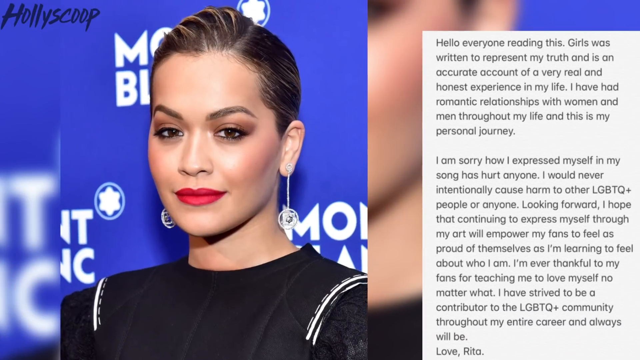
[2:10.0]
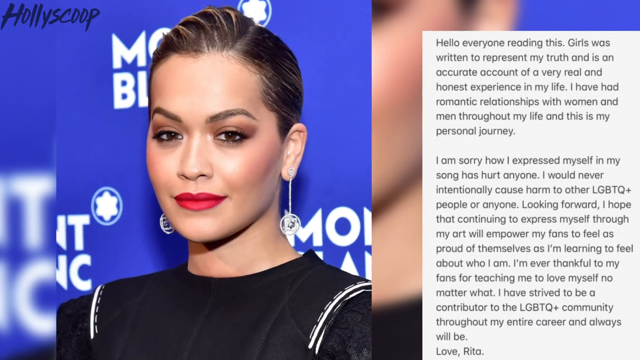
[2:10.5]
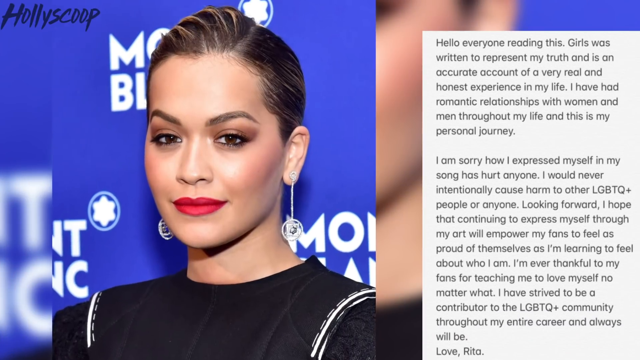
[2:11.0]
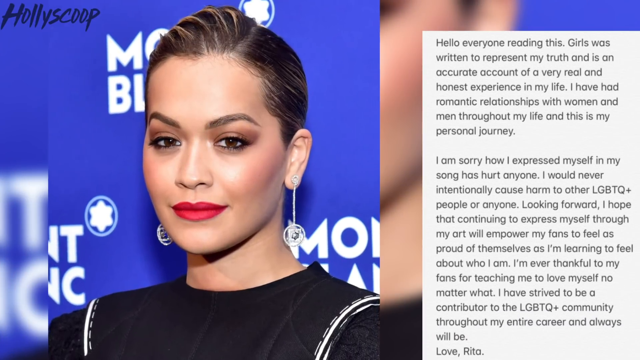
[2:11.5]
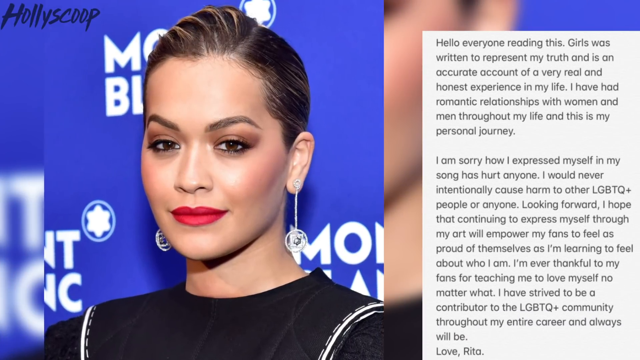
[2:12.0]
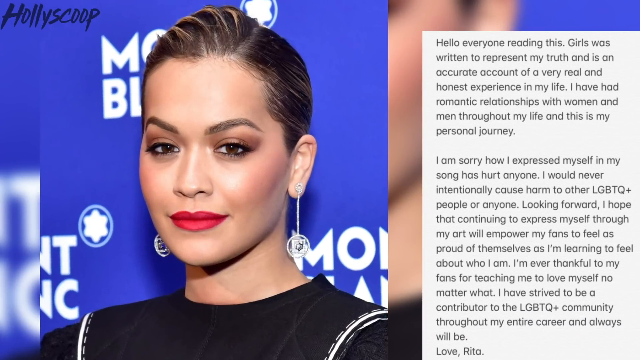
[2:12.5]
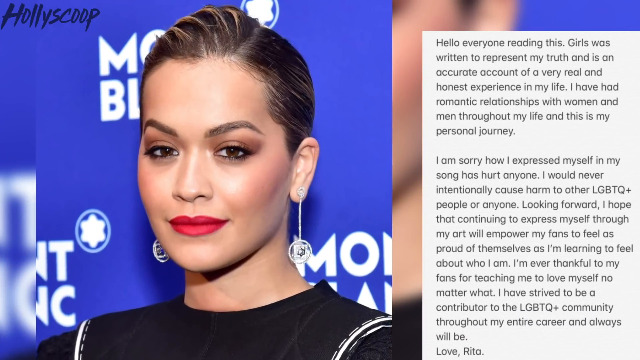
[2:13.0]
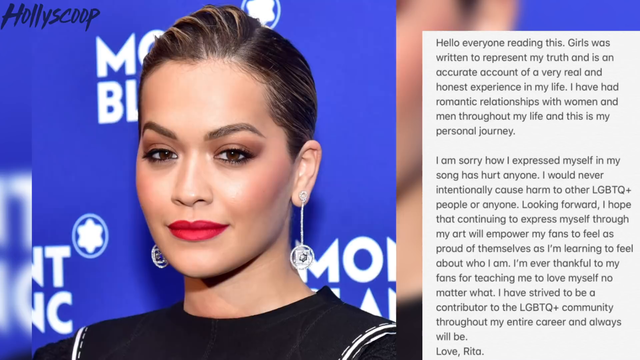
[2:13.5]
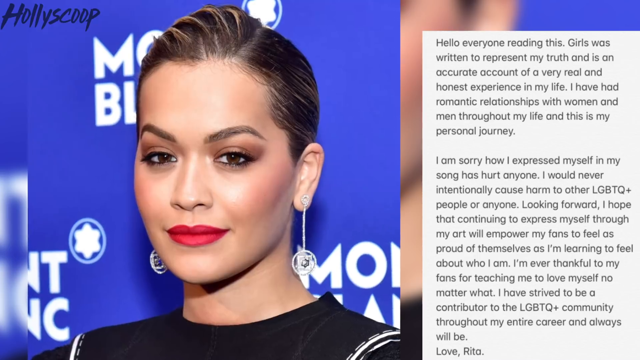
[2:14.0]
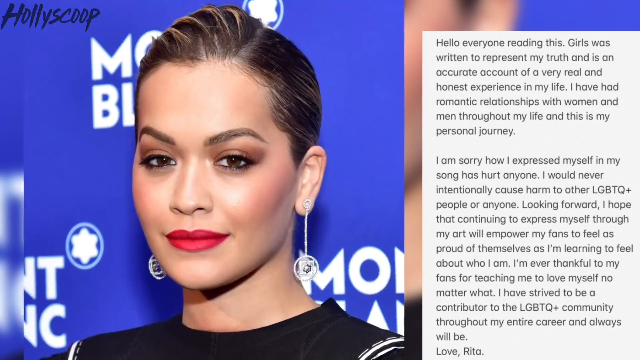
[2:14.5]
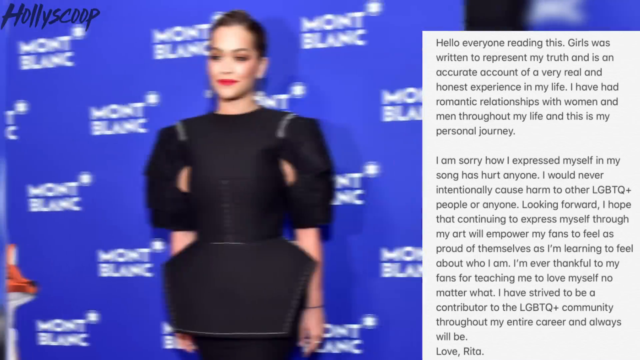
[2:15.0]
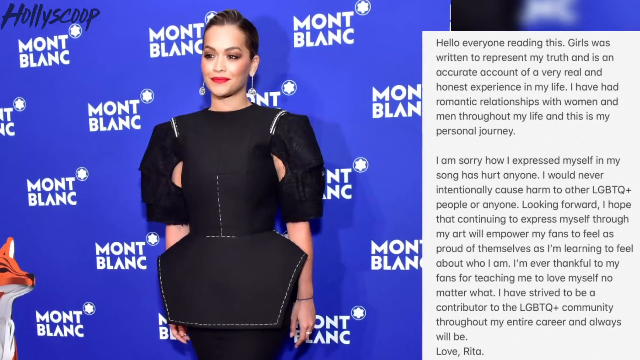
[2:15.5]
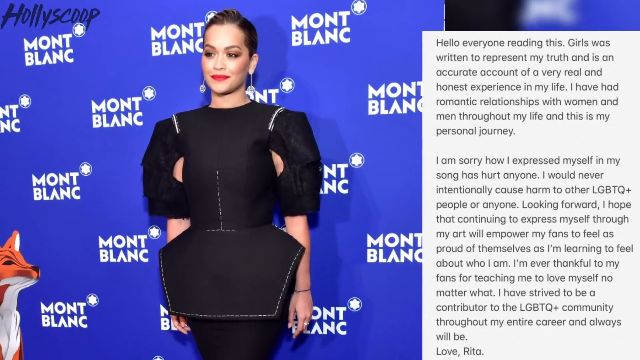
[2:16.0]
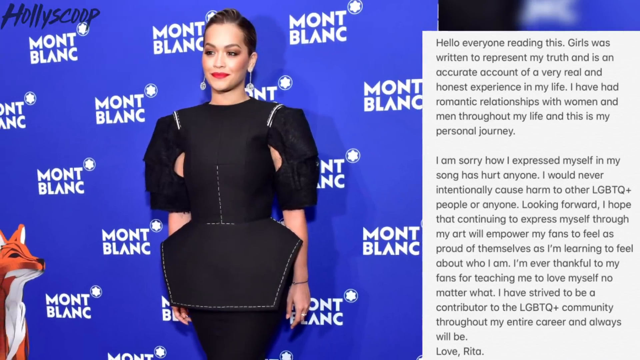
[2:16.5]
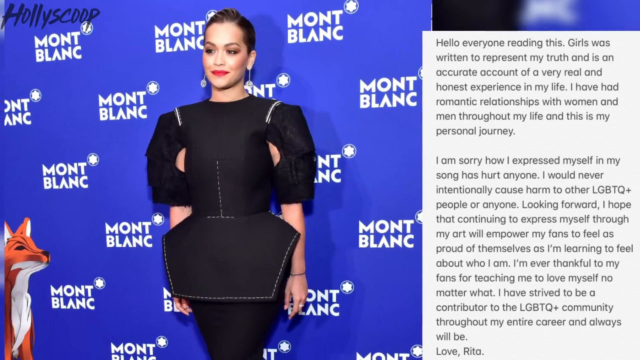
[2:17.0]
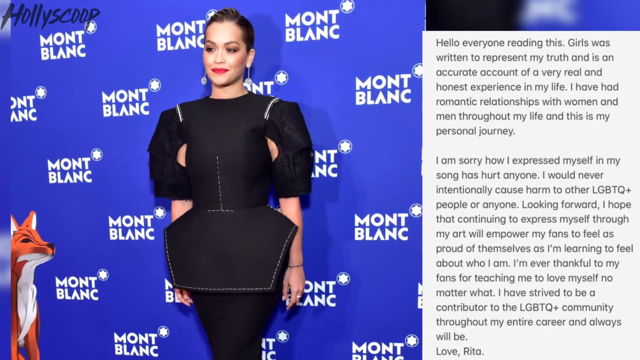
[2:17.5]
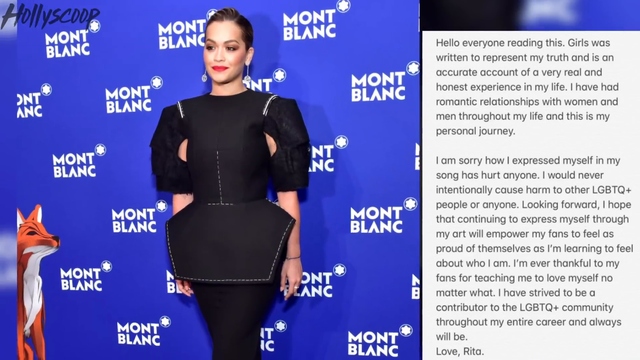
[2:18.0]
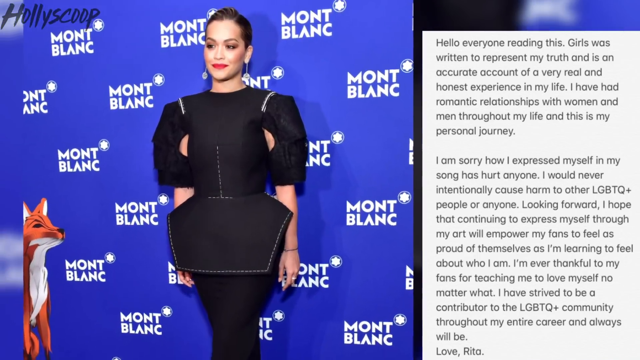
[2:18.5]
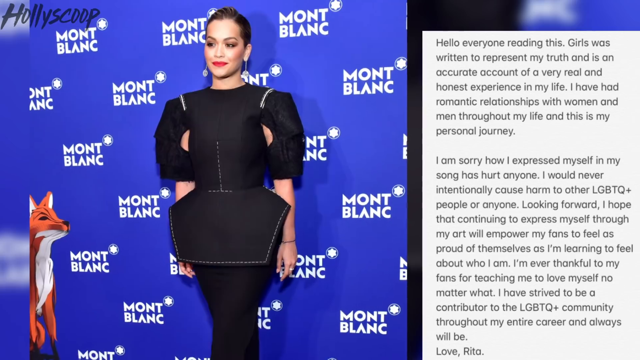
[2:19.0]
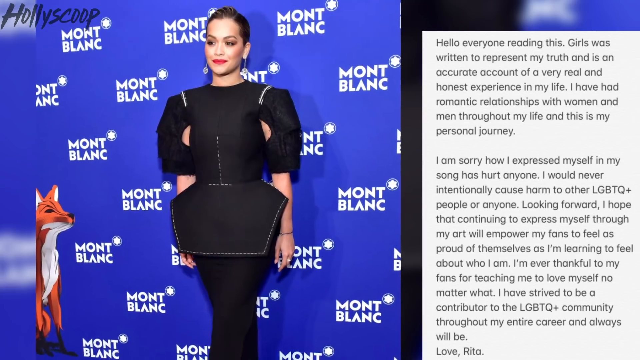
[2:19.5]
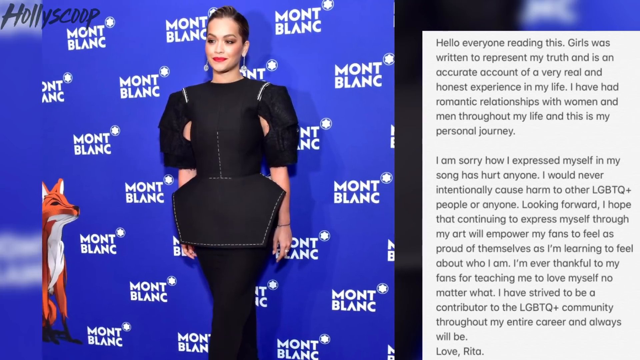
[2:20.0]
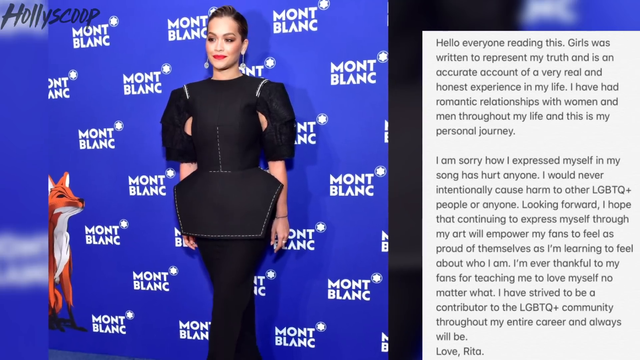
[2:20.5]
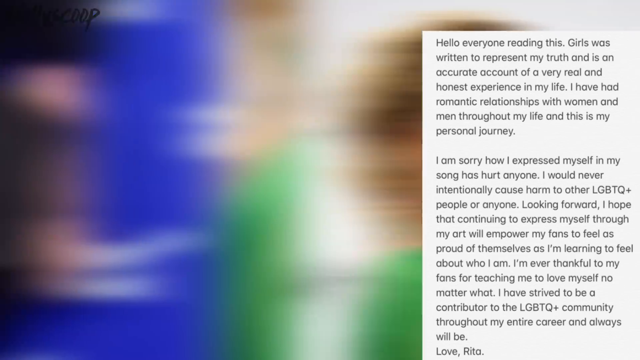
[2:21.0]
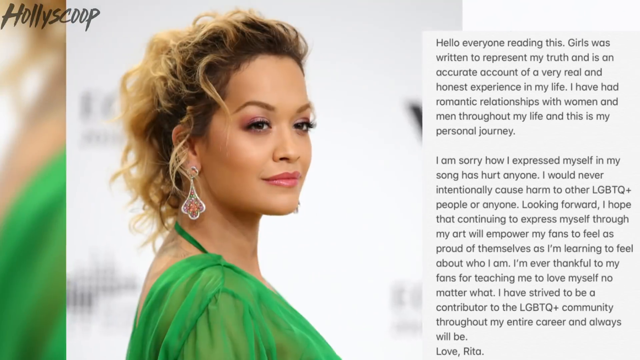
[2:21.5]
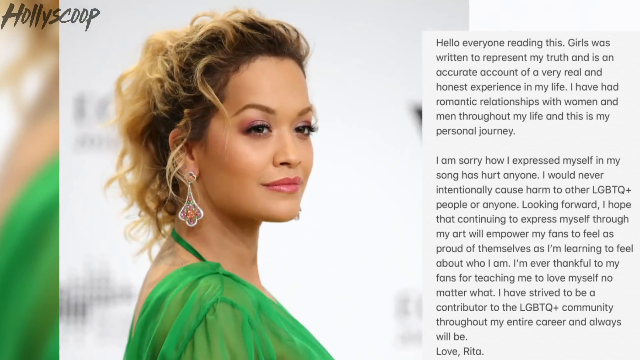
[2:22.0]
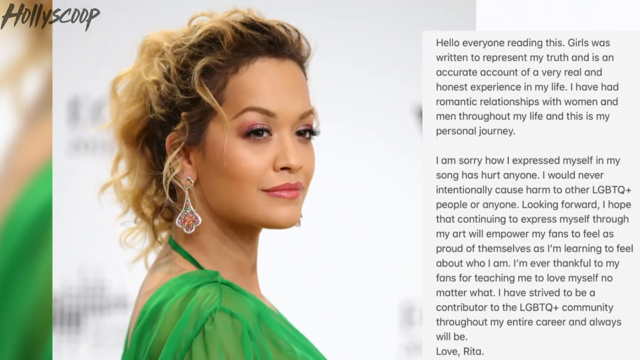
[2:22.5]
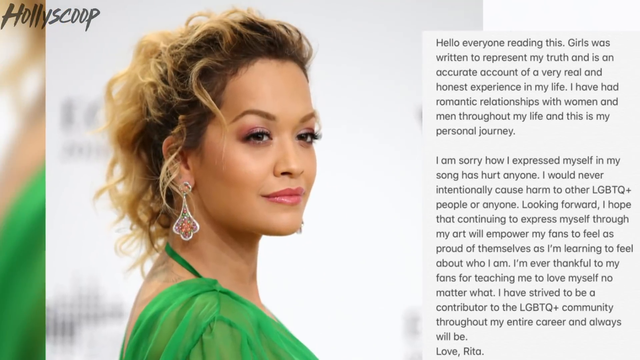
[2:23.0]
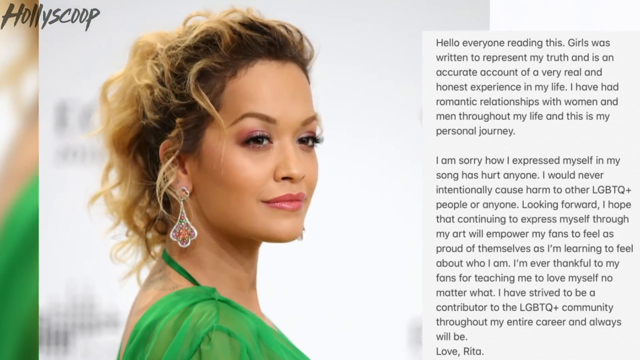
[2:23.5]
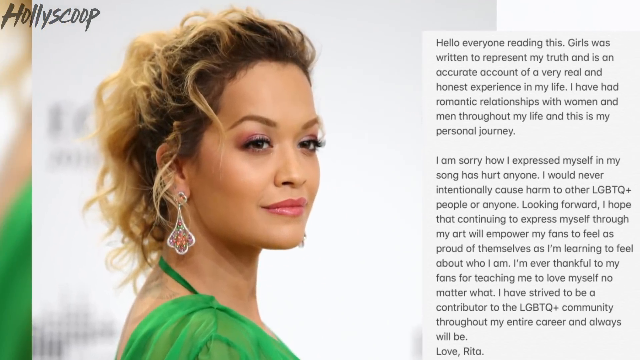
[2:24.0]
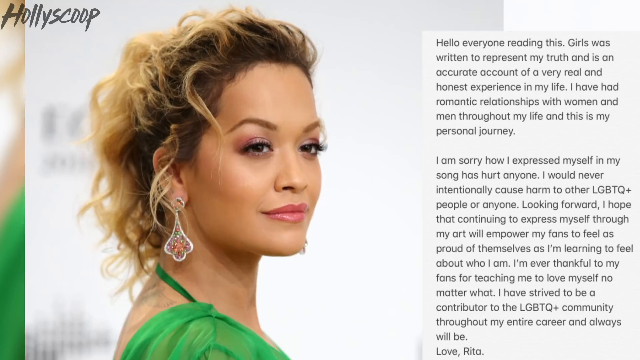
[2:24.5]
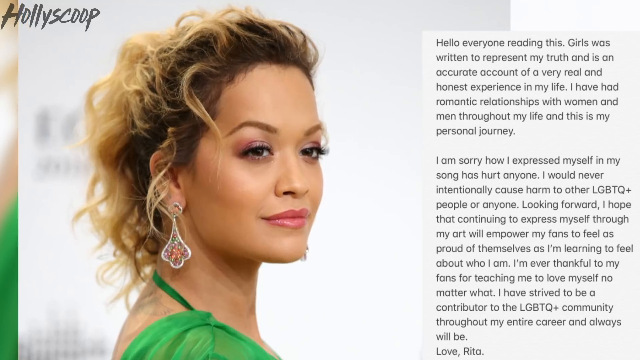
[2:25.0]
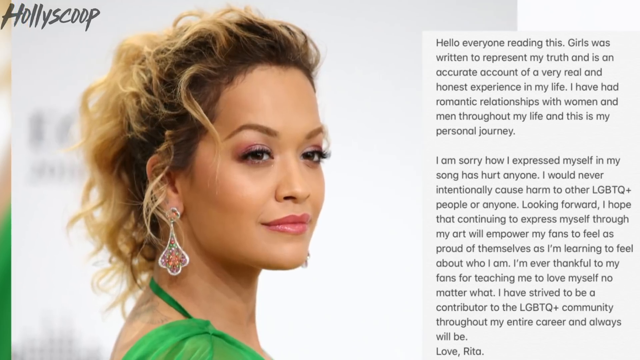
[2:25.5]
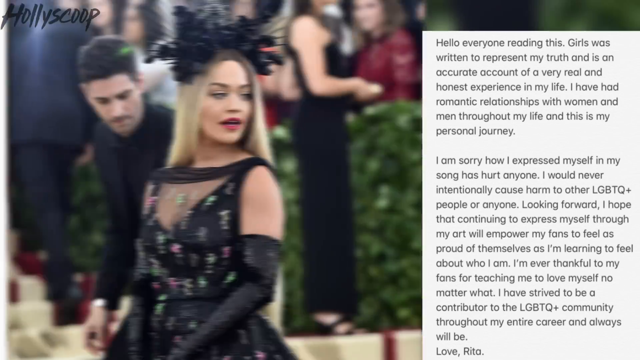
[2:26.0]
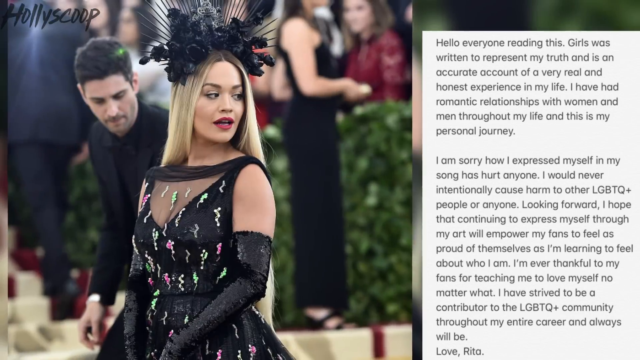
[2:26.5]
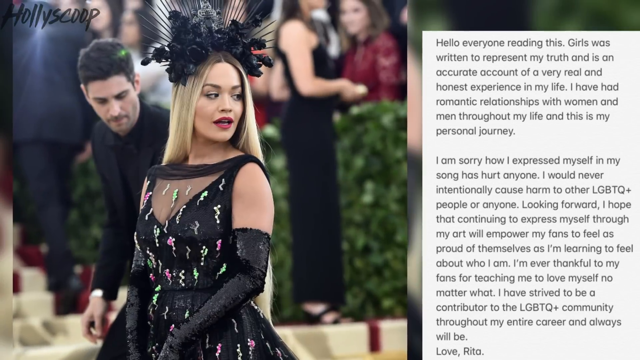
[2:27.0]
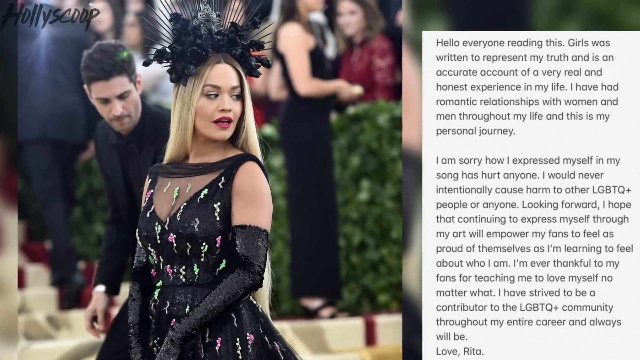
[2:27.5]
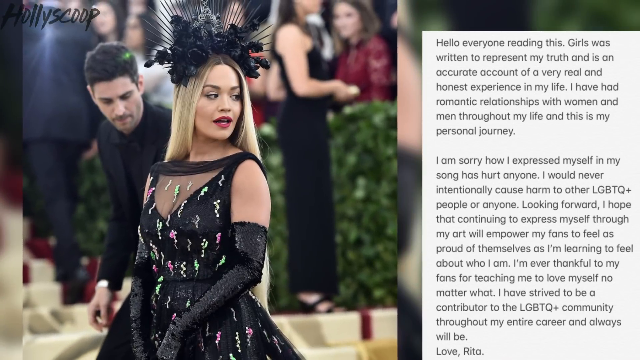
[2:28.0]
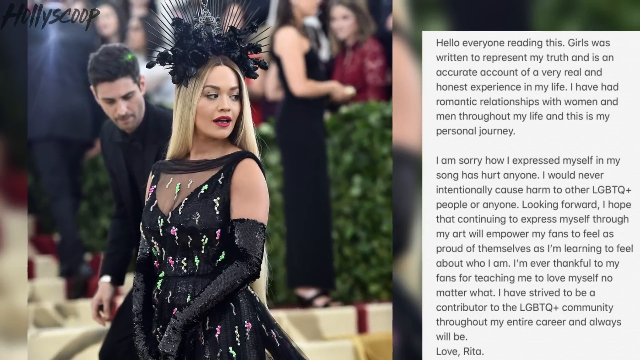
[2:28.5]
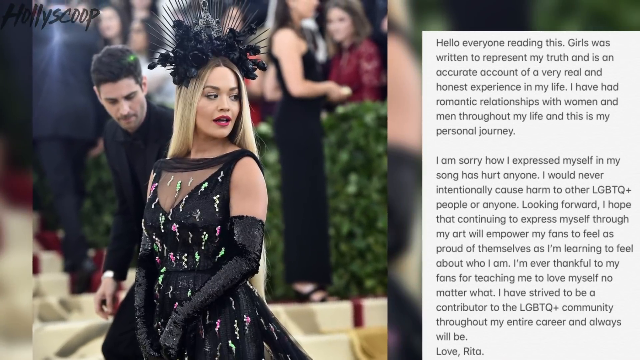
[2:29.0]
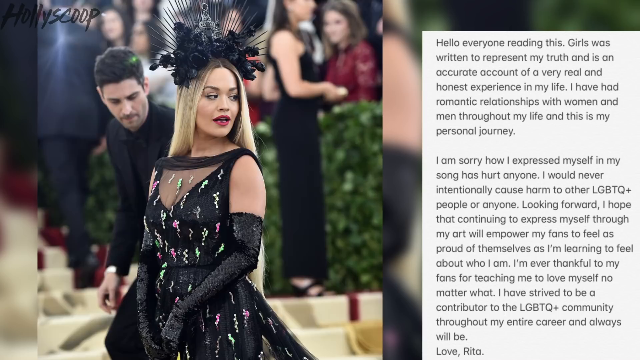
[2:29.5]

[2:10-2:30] Rita Ora's statement remains on the right as the picture of Rita Ora on the left zooms in. Another picture on the left shows her full outfit from the same red carpet appearance: a full black dress with a bold, almost hexagonal shape, and the picture zooms out. Another picture shows Rita Ora with her hair pulled back but still very wavy, looking off to her side, in a green lace dress. The post stays on the right as yet another picture on the left shows Rita Ora apparently at the Grammys, on the Grammy steps. She wears a black dress with a semi-transparent overlay covered in green, teal, pink and other swirly patterns, and a black headdress with spiked parts and what appear to be black flowers. Her hair is long, straight and blonde, and she wears muted red lipstick.